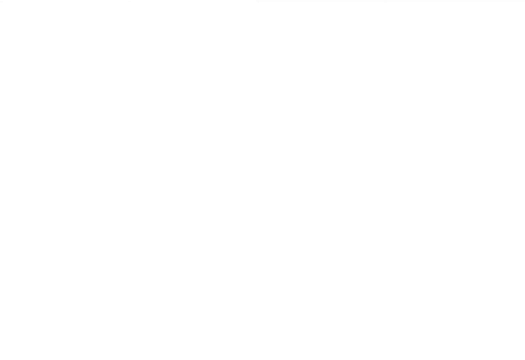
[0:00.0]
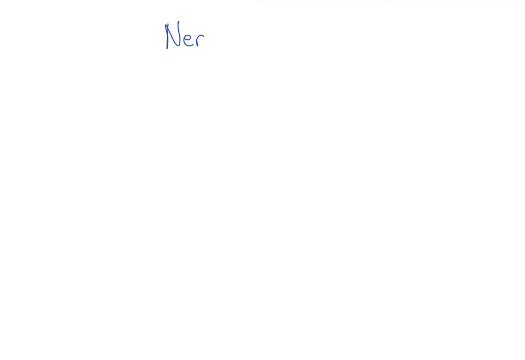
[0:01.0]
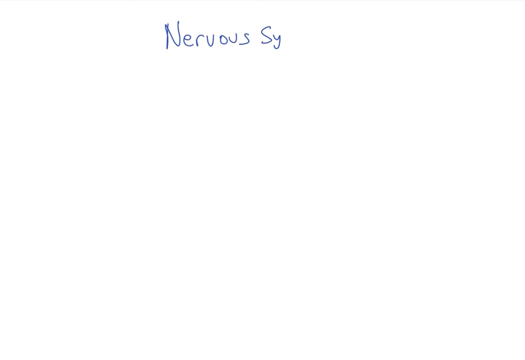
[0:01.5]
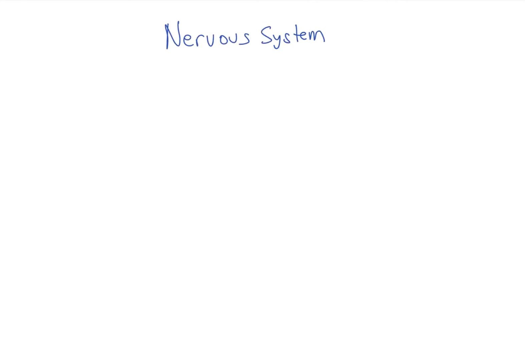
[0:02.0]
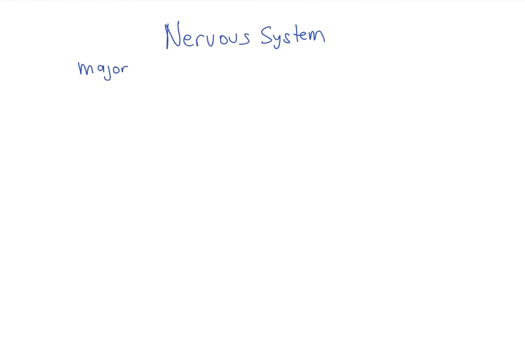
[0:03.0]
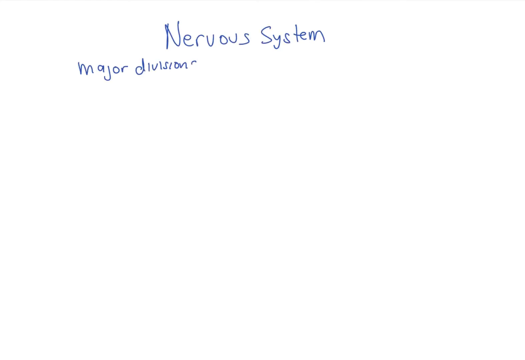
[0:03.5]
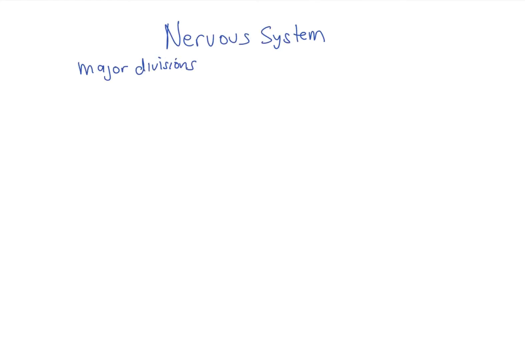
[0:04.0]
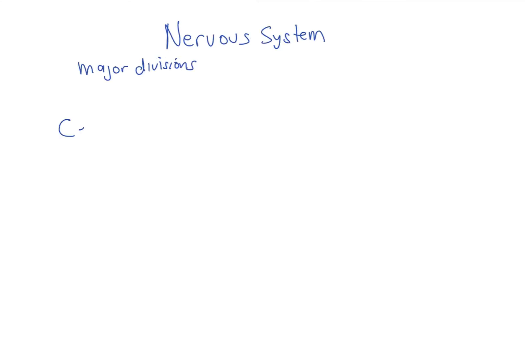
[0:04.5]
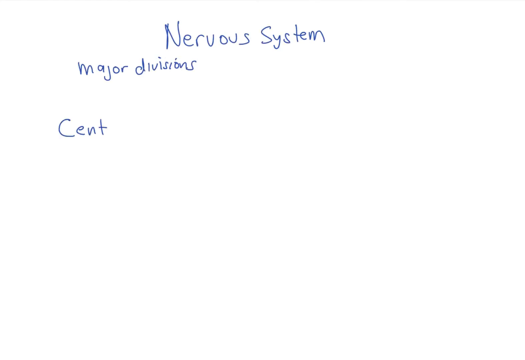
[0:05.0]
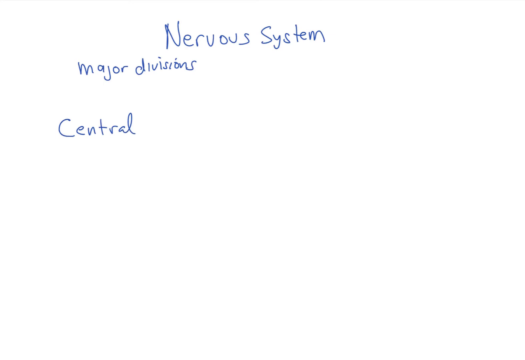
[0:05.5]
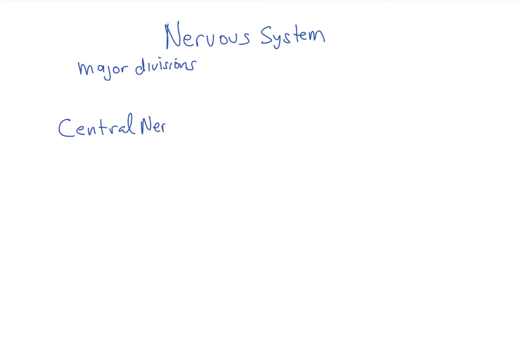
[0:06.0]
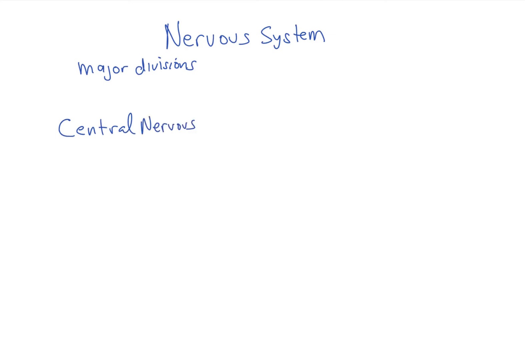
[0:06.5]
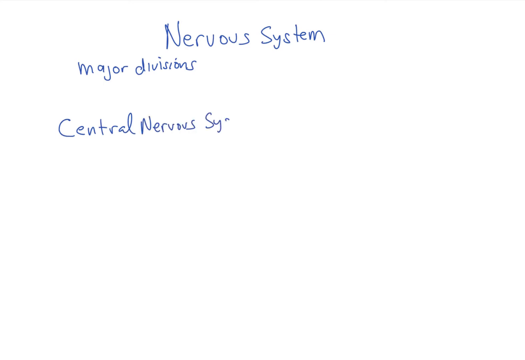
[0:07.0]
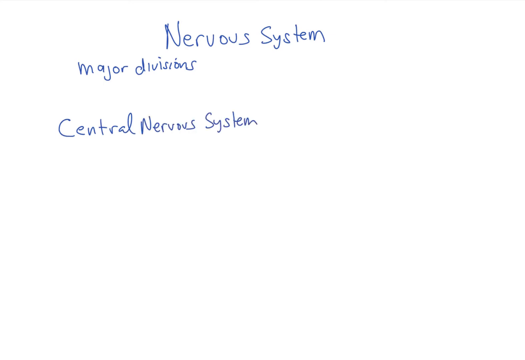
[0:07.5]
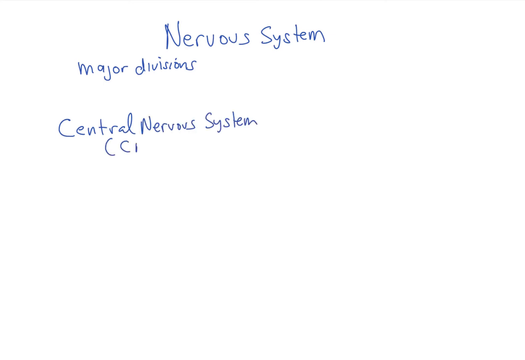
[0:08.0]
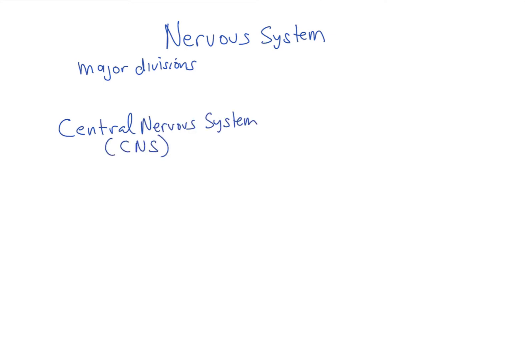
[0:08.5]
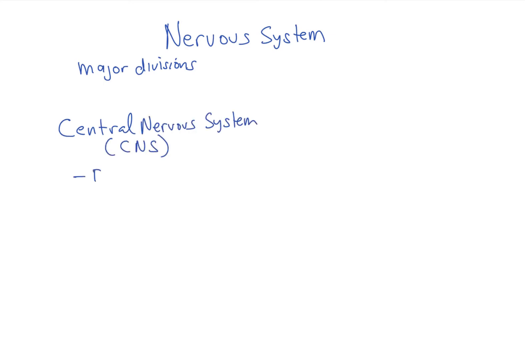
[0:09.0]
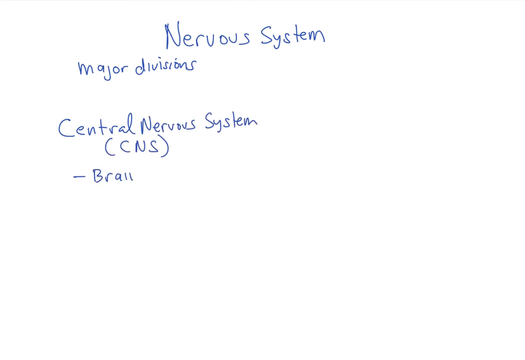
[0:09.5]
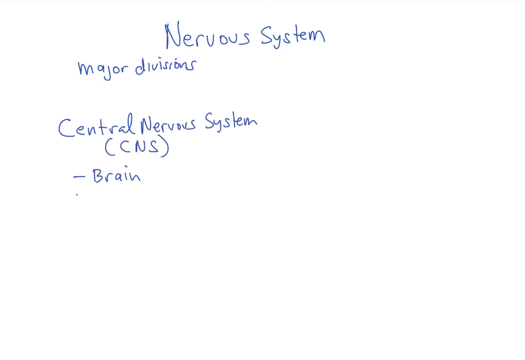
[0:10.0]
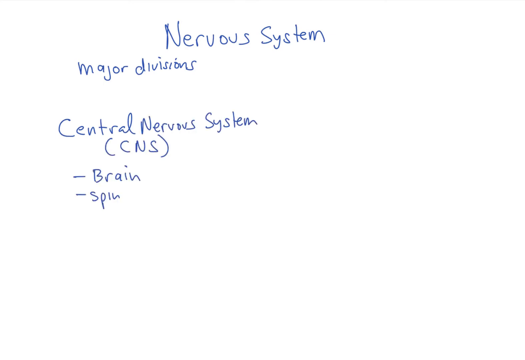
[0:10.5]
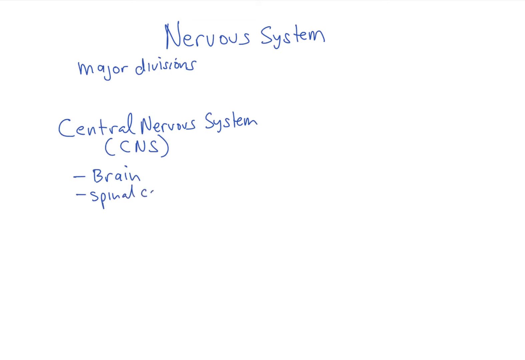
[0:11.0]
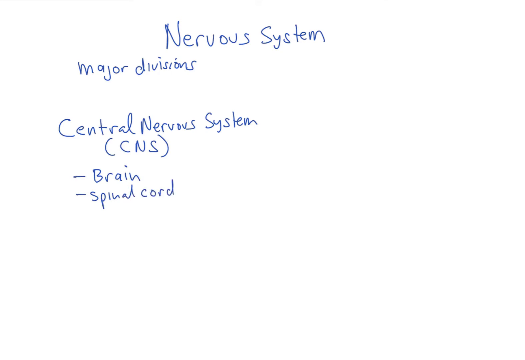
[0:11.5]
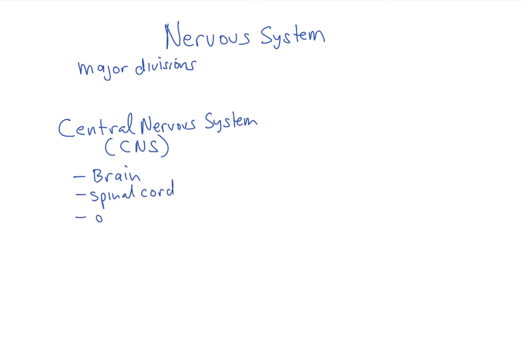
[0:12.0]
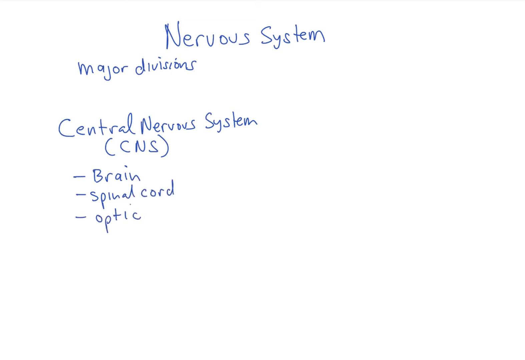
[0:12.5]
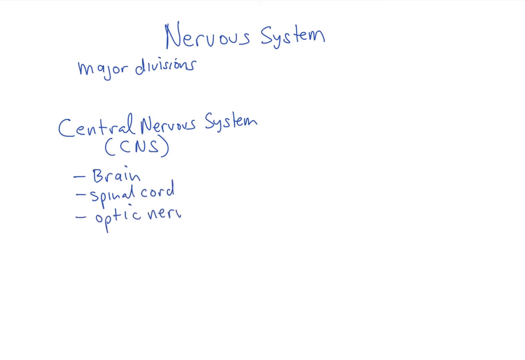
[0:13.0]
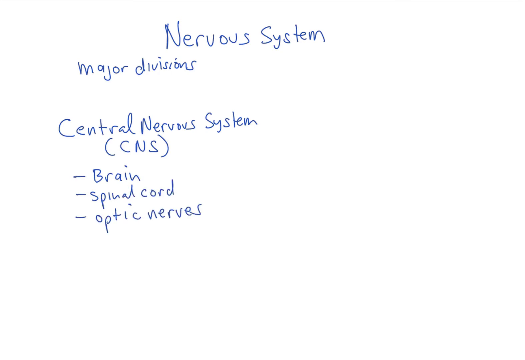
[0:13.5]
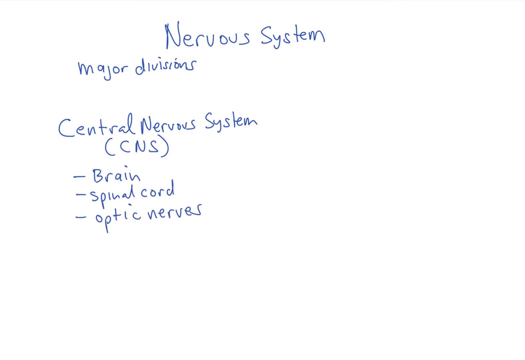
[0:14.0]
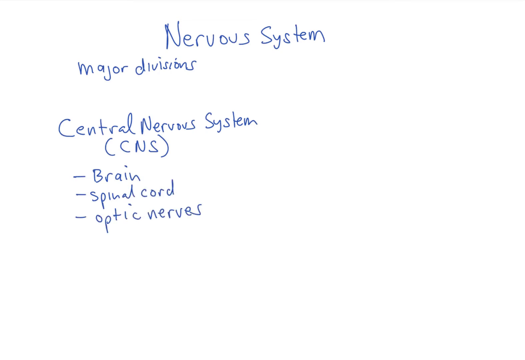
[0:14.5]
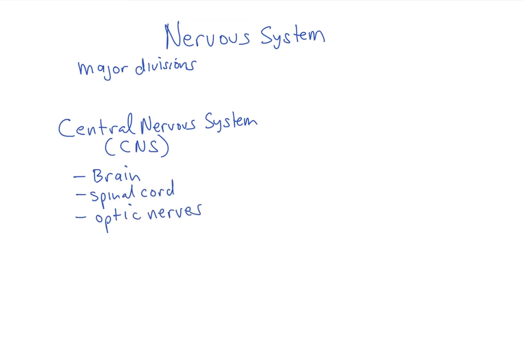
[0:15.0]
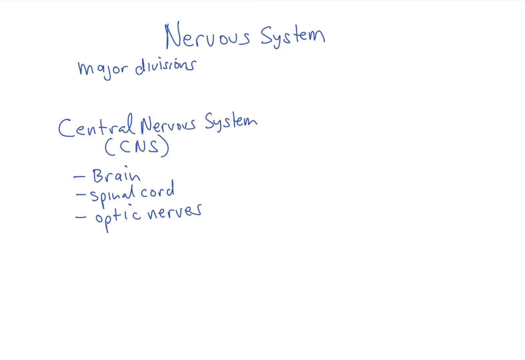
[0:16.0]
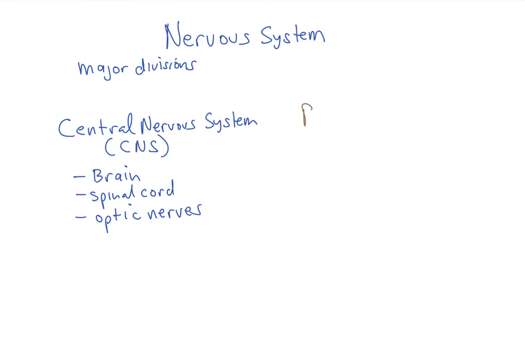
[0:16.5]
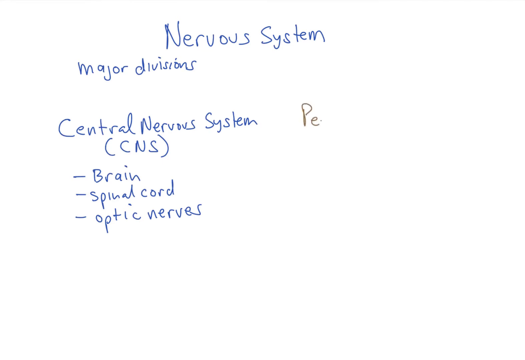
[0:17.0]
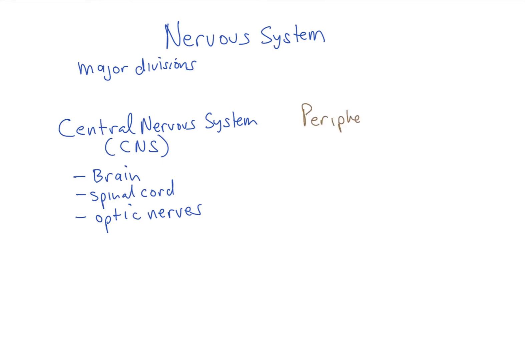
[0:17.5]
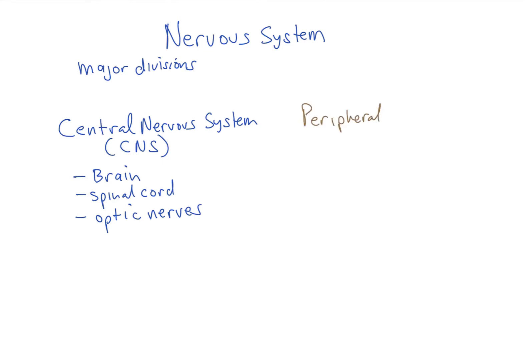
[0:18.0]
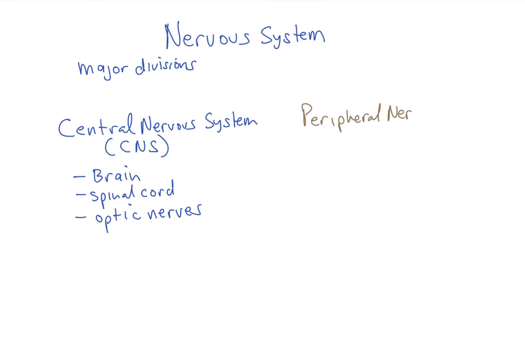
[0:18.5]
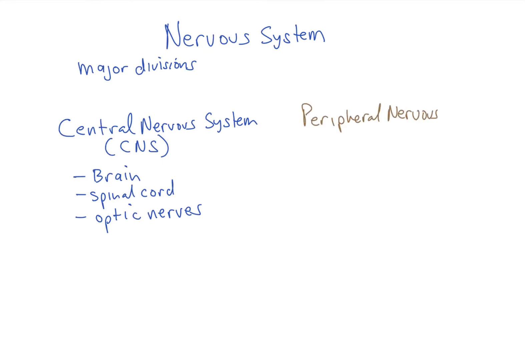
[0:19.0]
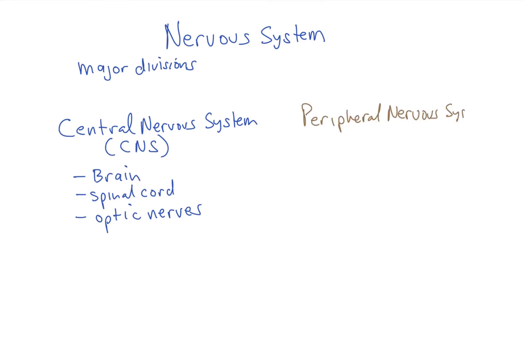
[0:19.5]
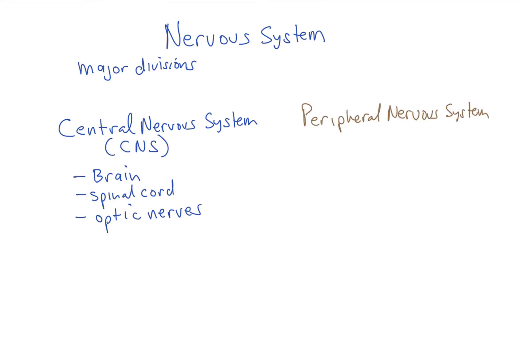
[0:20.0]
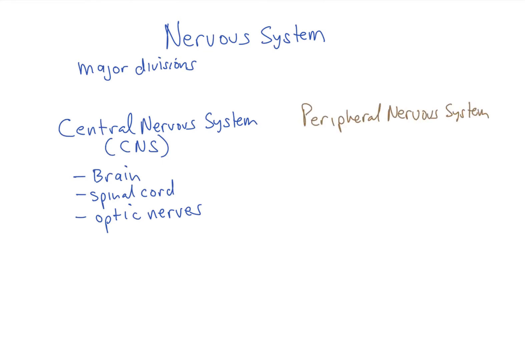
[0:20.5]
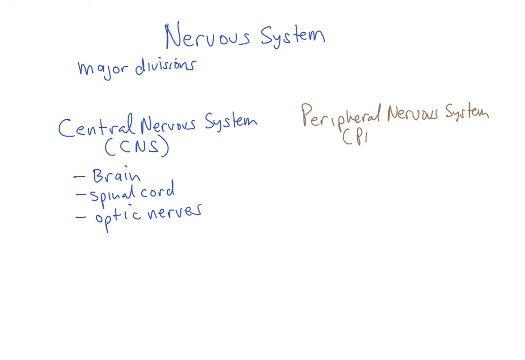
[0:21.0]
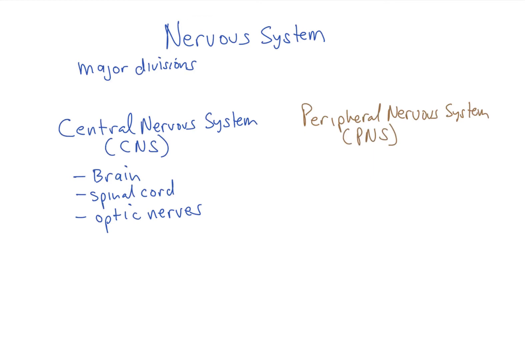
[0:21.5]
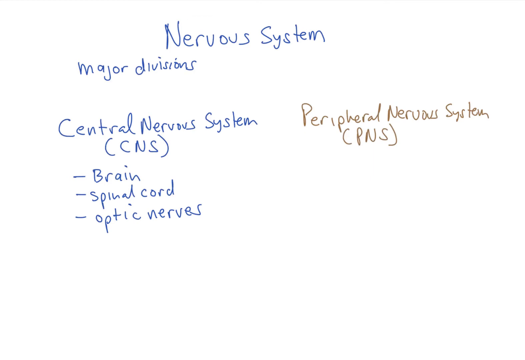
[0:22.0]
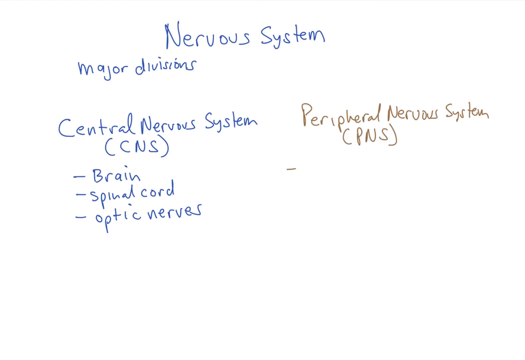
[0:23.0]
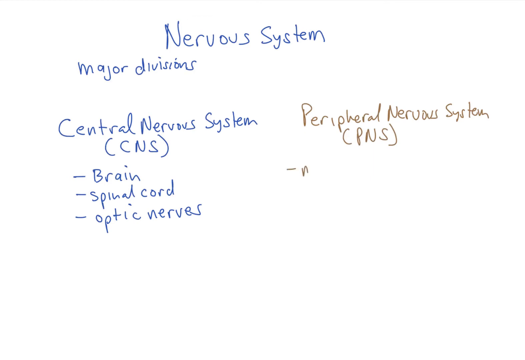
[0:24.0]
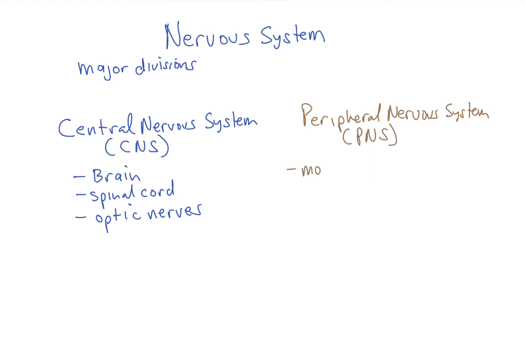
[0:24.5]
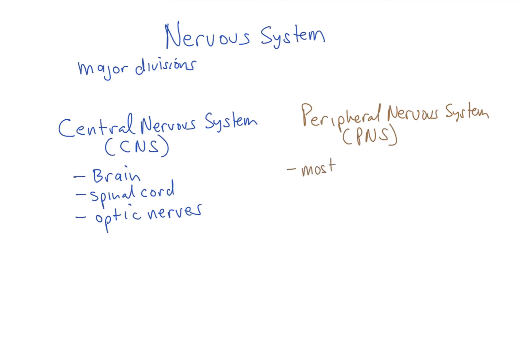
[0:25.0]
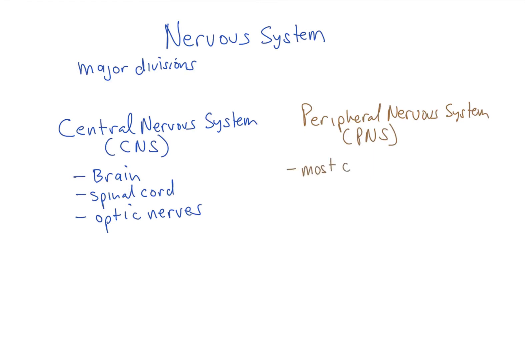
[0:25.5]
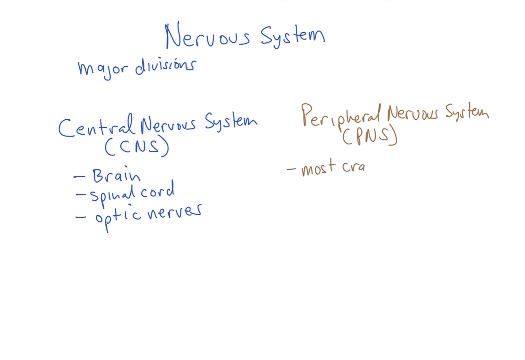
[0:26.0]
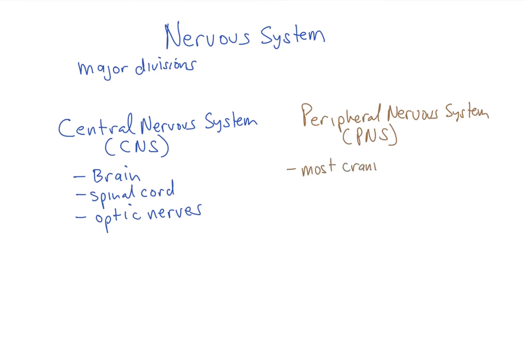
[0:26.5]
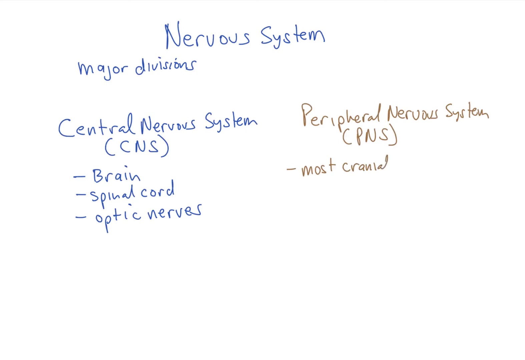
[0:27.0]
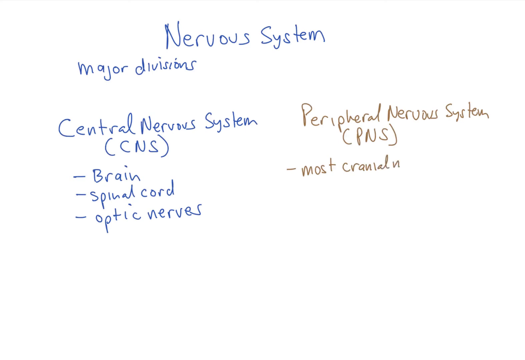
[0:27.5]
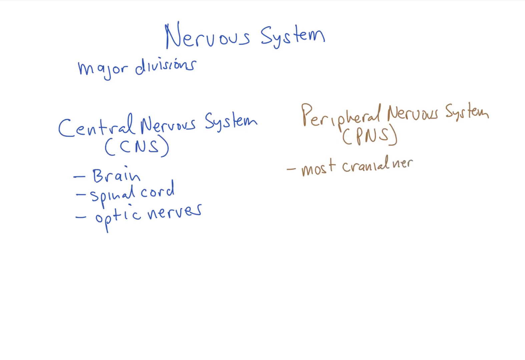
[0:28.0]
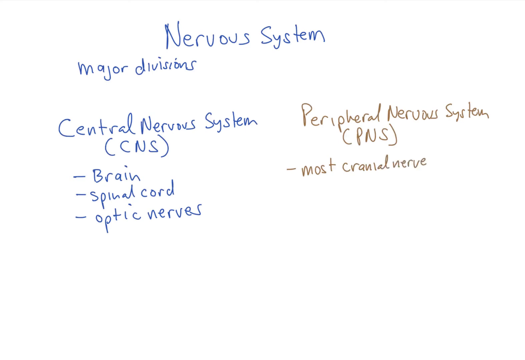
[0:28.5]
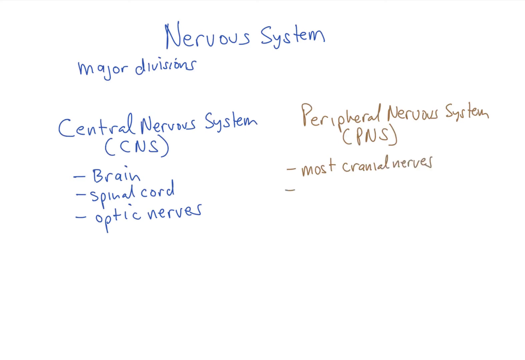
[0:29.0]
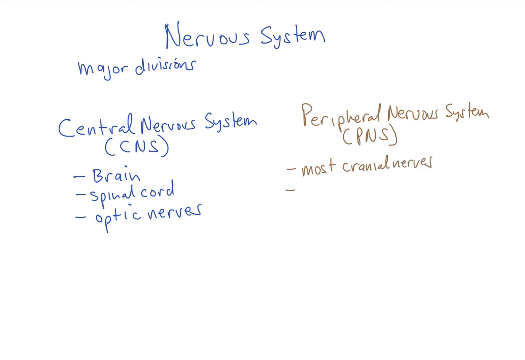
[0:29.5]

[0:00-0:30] The video starts on a blank screen. The text "nervous system" is then written as a title at the top of the screen in blue, handwritten-style font, appearing one letter at a time. Underneath, more text appears letter by letter: first "major divisions", then below that "central nervous system" with "CNS" in brackets. Bullet points follow: "brain", "spinal cord" and "optic nerves". On the right side of the screen, "peripheral nervous system" is written letter by letter with a grey-coloured marker, followed by "PNS" in brackets, and a bullet point underneath reads "most cranial nerves". The letters "spi" then begin to appear.